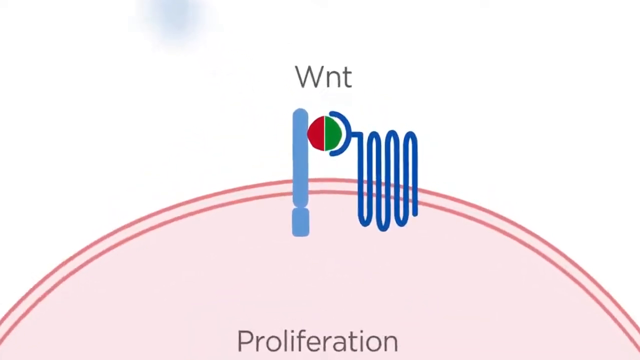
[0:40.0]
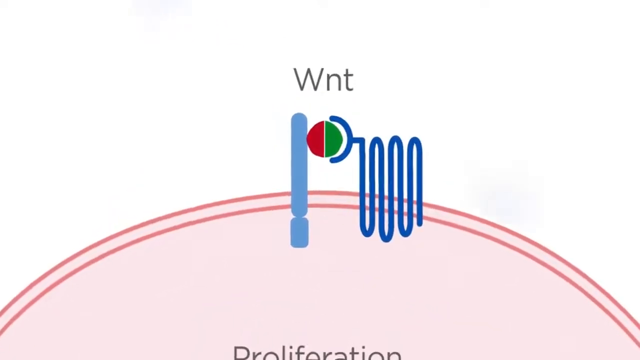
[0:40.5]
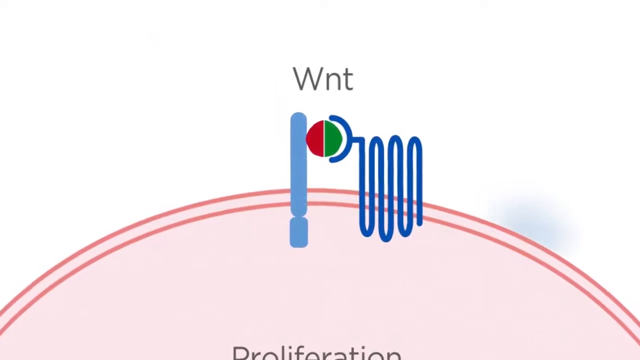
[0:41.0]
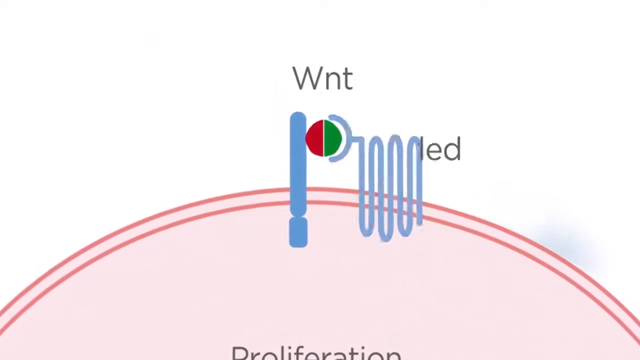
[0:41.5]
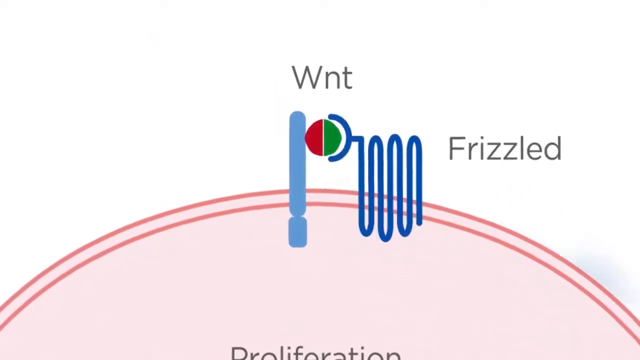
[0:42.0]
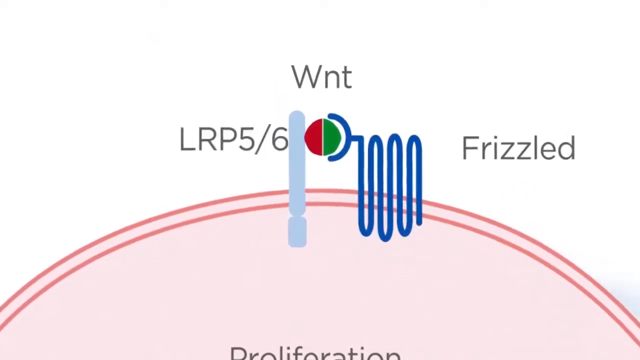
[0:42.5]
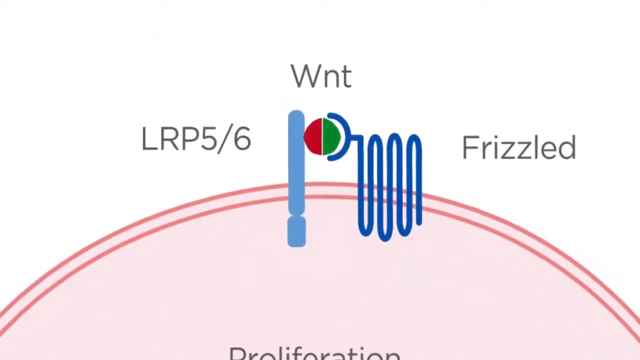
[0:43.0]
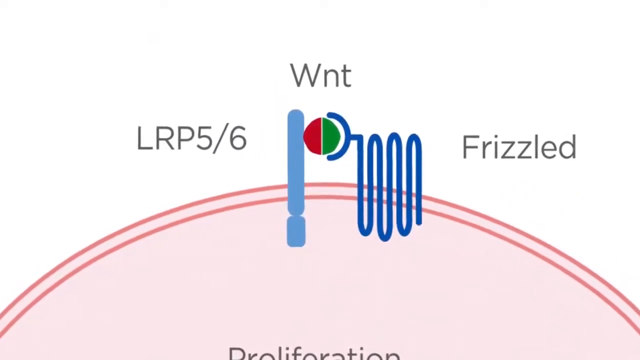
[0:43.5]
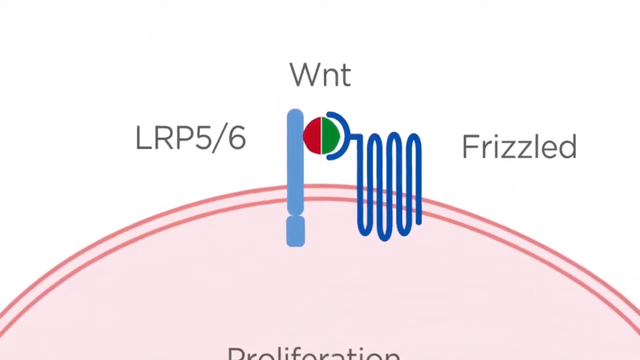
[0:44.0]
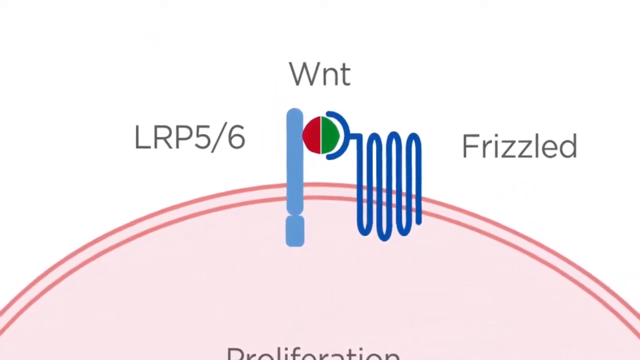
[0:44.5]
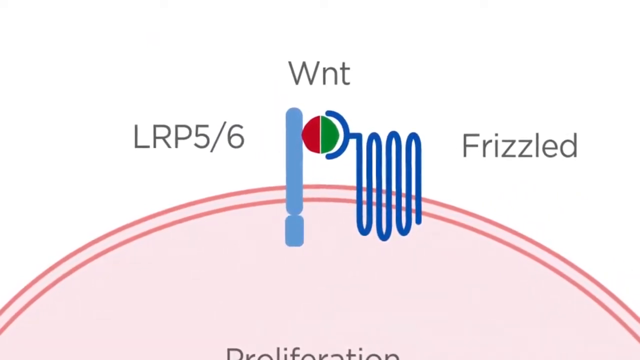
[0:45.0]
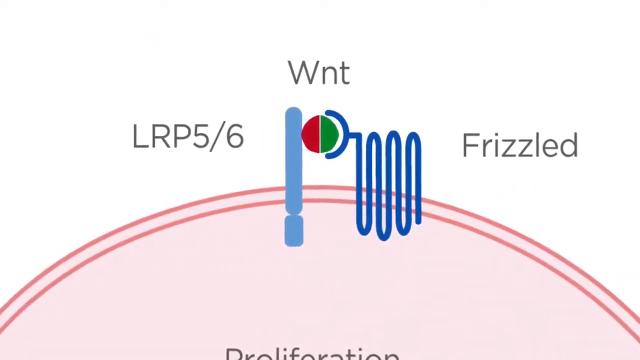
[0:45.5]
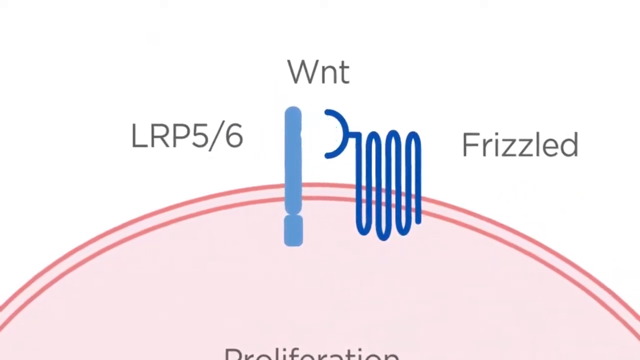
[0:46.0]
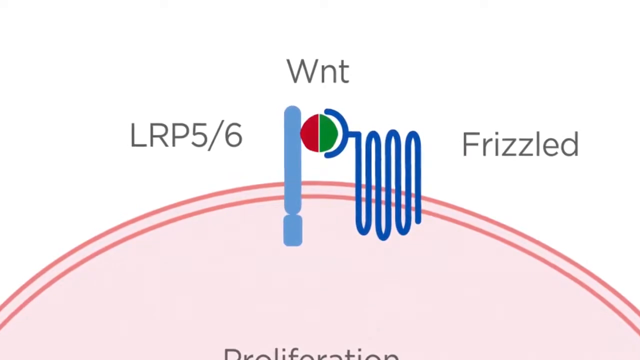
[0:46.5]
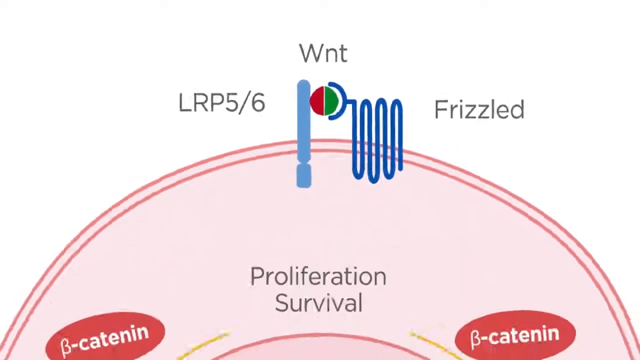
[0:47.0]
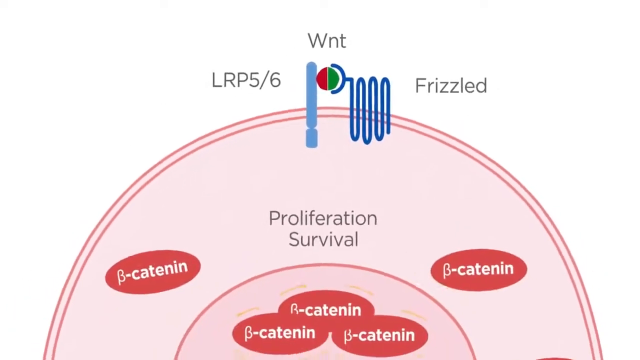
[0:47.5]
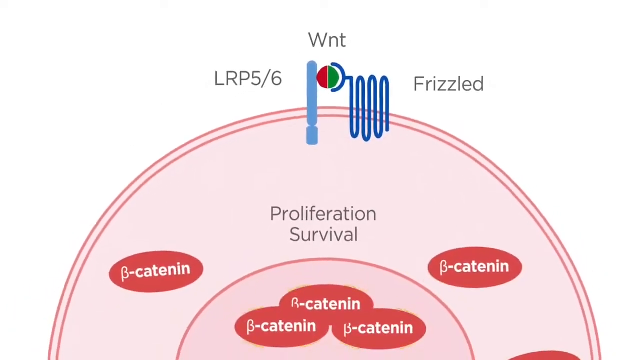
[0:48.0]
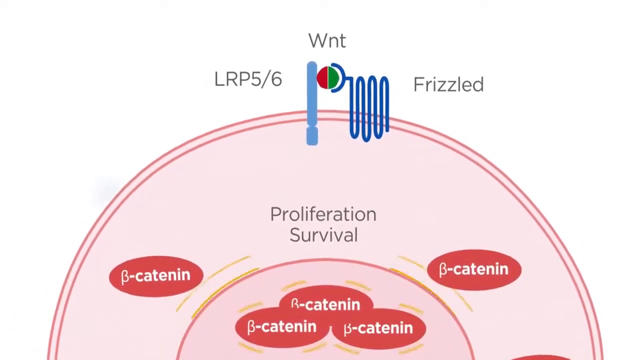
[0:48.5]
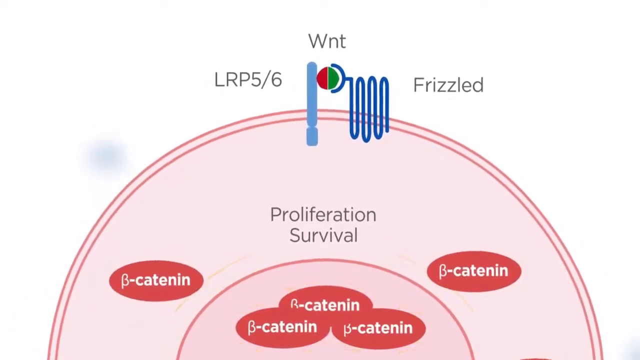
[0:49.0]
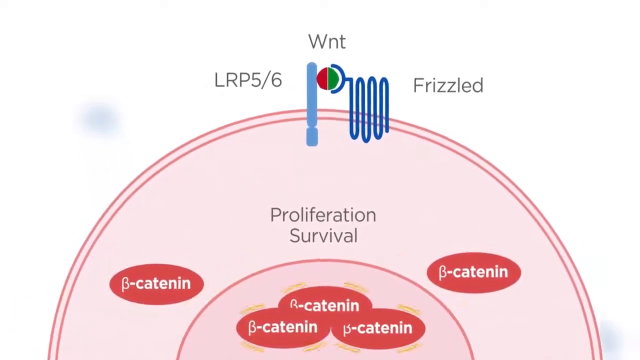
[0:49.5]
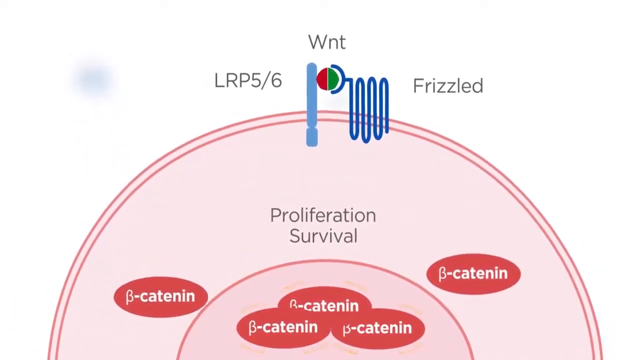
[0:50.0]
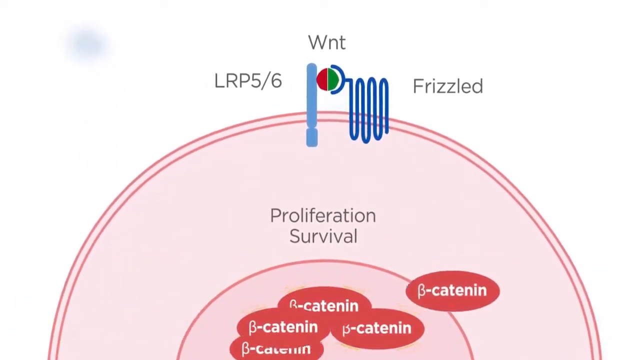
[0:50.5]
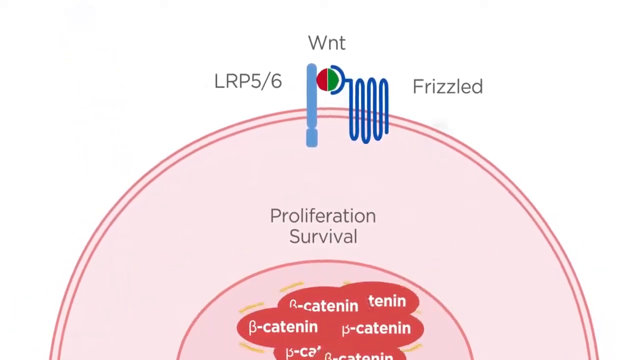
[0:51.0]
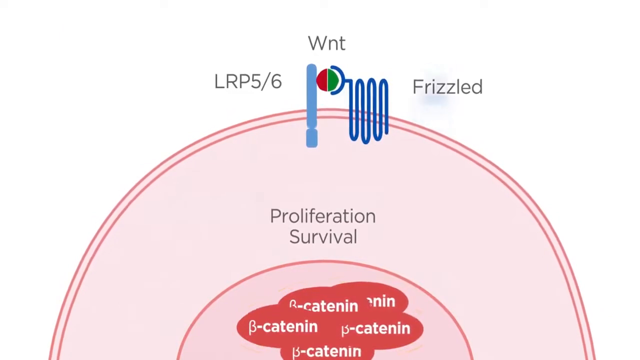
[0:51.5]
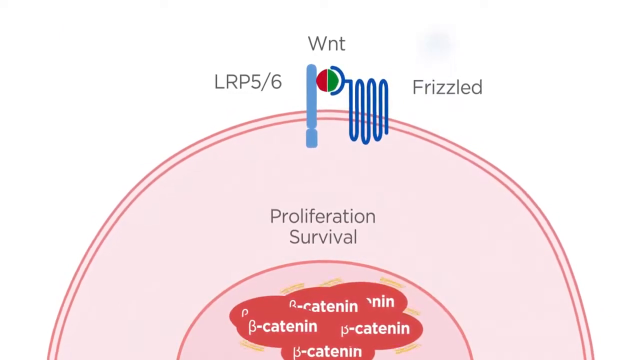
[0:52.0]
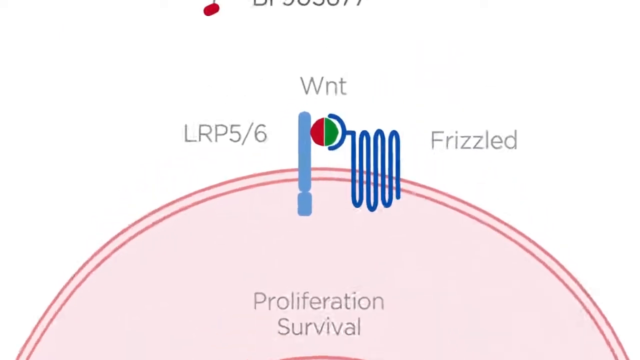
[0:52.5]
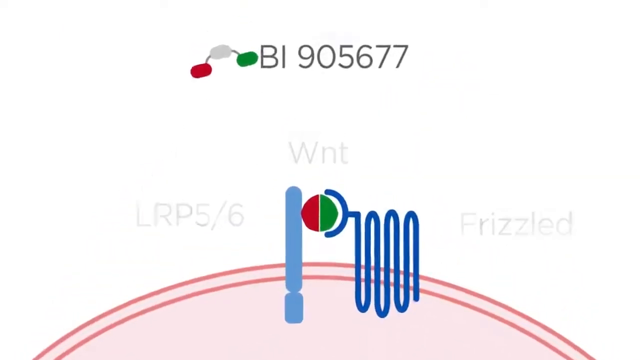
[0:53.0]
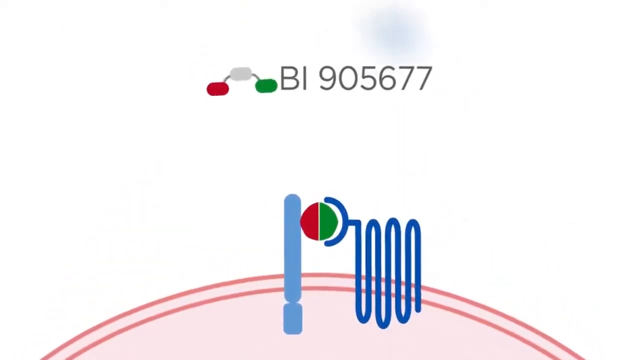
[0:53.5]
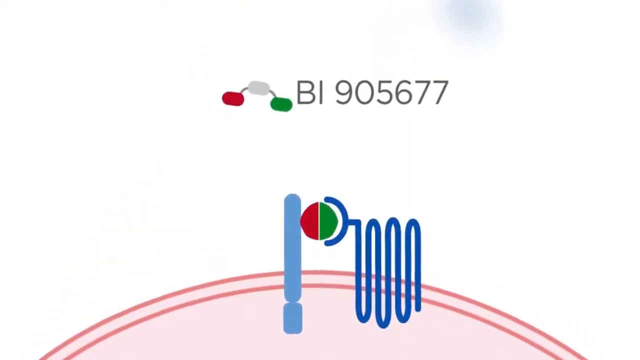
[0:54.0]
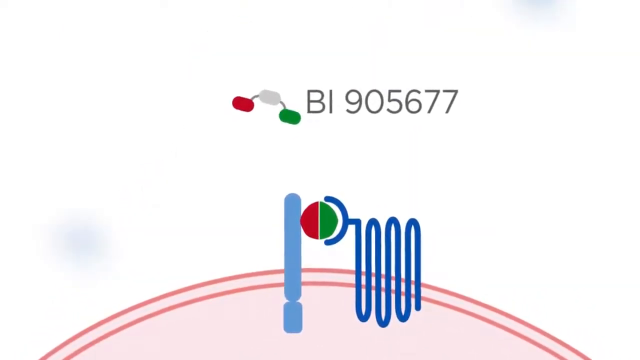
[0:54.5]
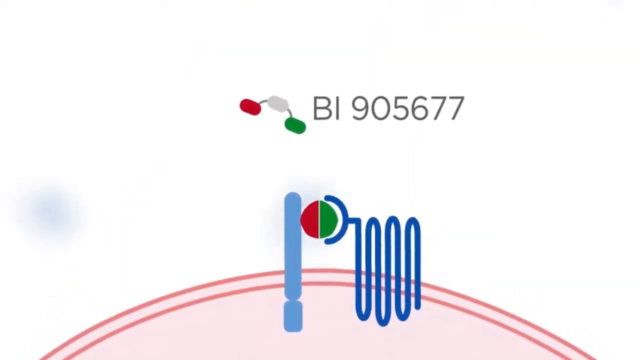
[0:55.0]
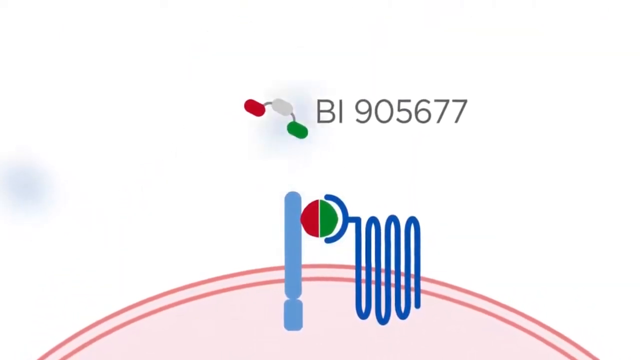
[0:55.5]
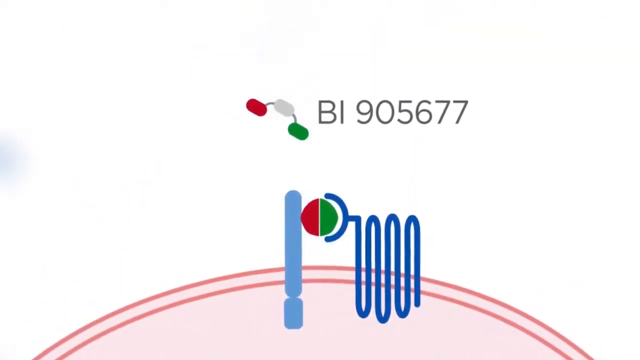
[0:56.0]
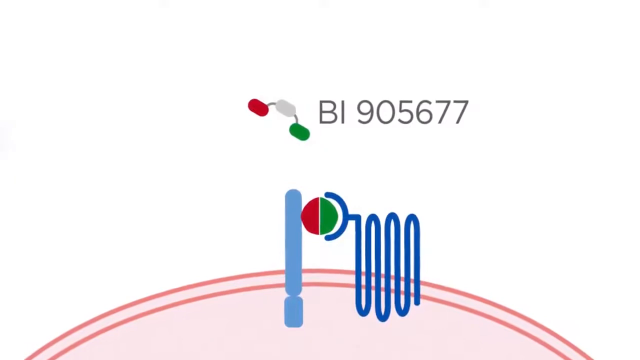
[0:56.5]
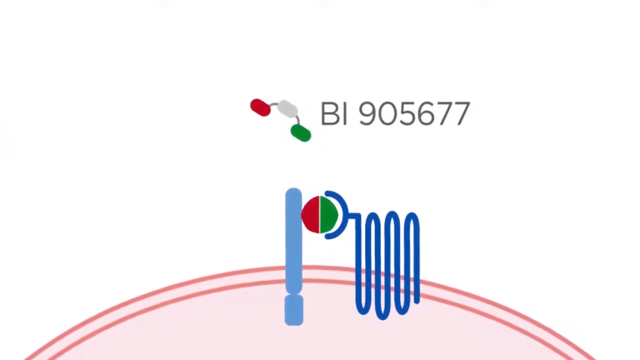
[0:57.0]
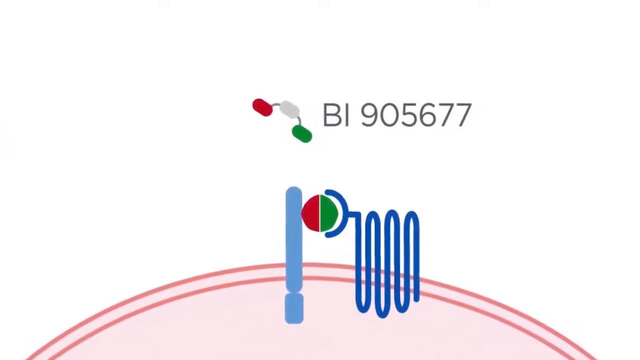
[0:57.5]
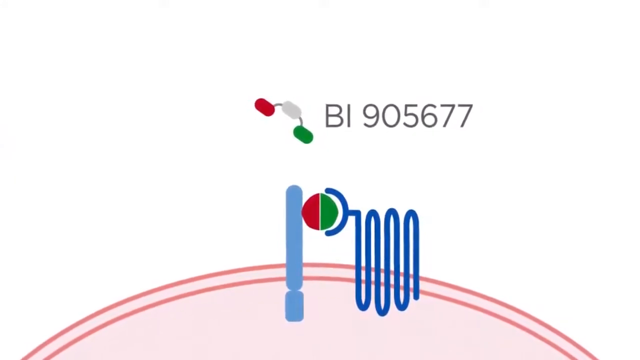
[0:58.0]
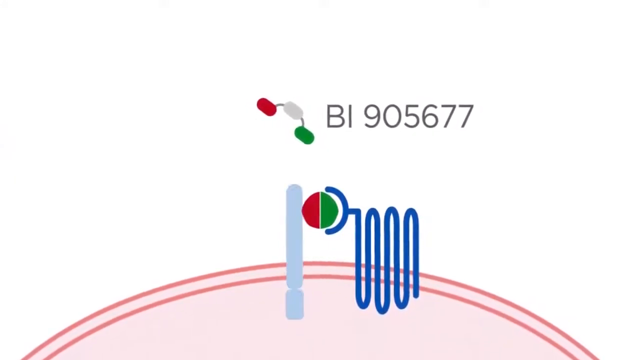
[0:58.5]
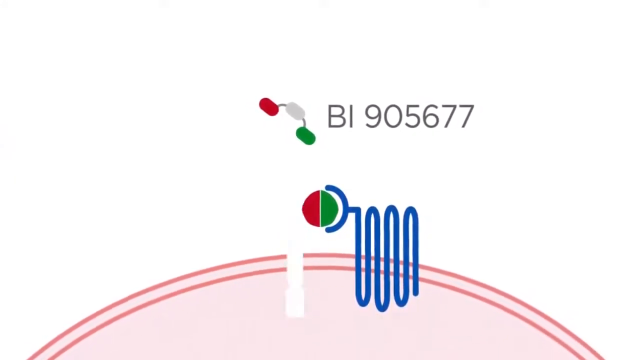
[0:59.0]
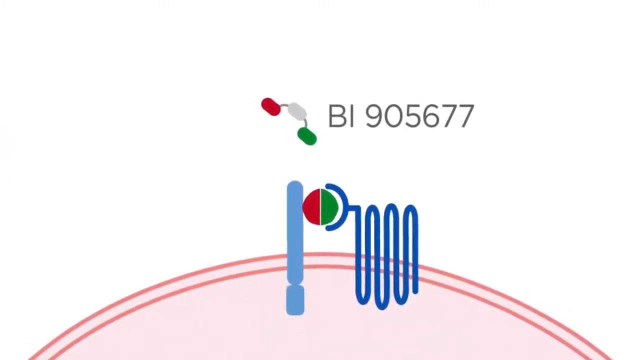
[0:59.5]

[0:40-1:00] The graphic is zoomed in again on the squiggly line, and the different elements start to be highlighted: first the blue squiggly line flashes and the text "frizzled" appears on the right side. On the left side, a bluish-gray vertical cylindrical object flashes as well, with the text "LRP 5-6". The lettering is all gray, kind of blackish. The cell is kind of moving up and down while the red and green circle starts to flash. The B-catenin compounds again move toward the middle of the cell, while some excess blue circular shapes come outside the cell into the white top portion of the image. A three-part object then comes into play: red, gray and green, each color a different circular shape, connected with a gray wire, with the text "BI 905-677" to its right. It starts to float down toward the graphic at the bottom of the image. At the end, the bluish-gray vertical object starts to blink again.